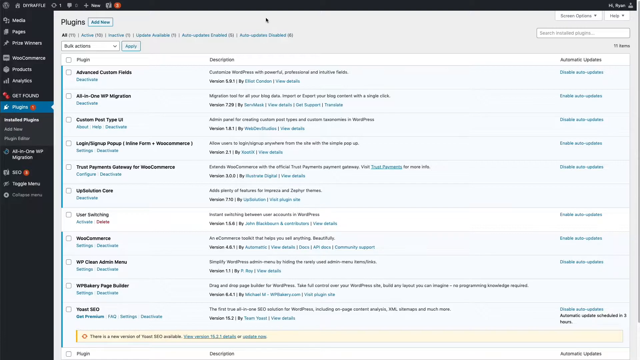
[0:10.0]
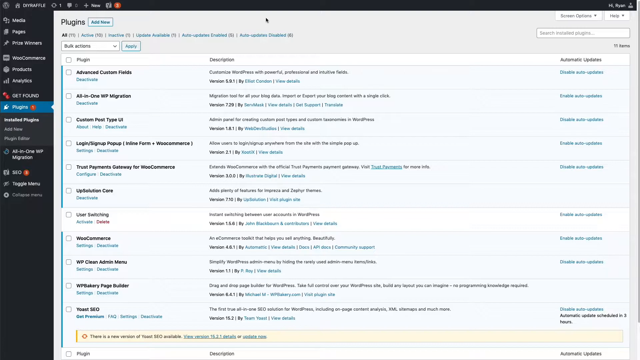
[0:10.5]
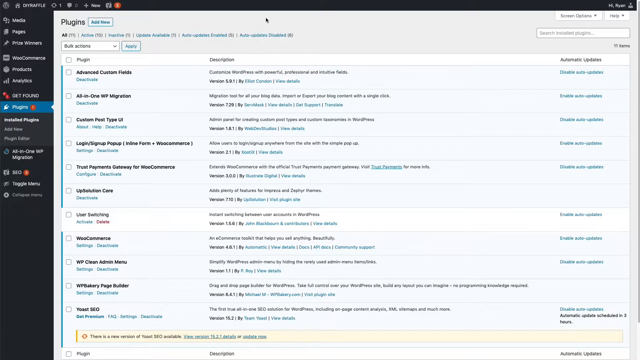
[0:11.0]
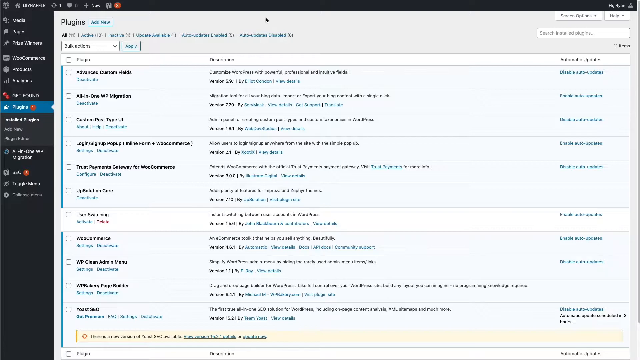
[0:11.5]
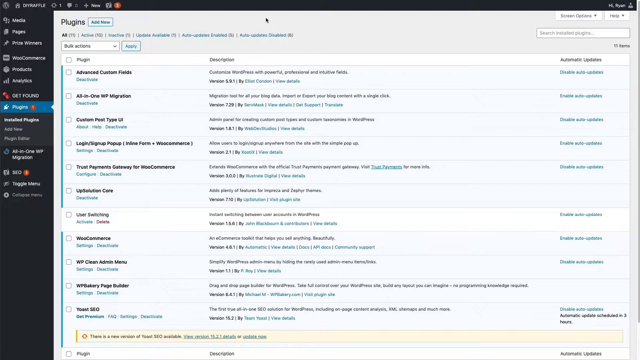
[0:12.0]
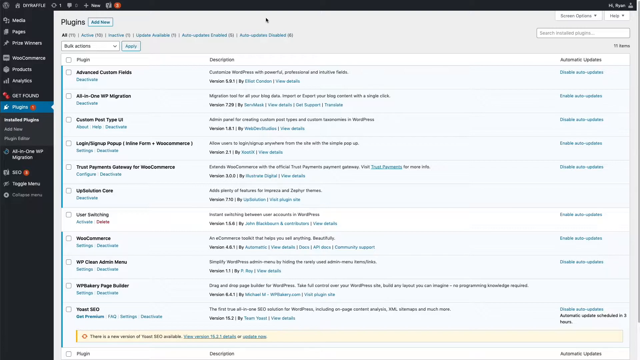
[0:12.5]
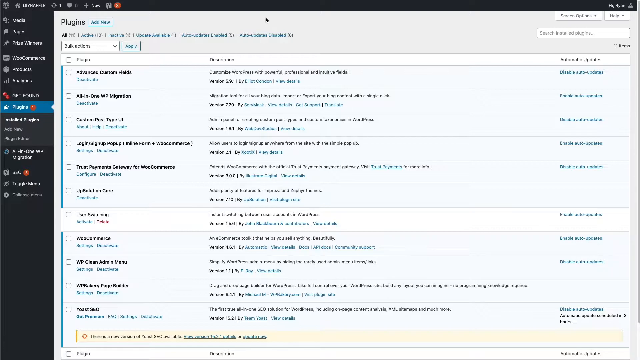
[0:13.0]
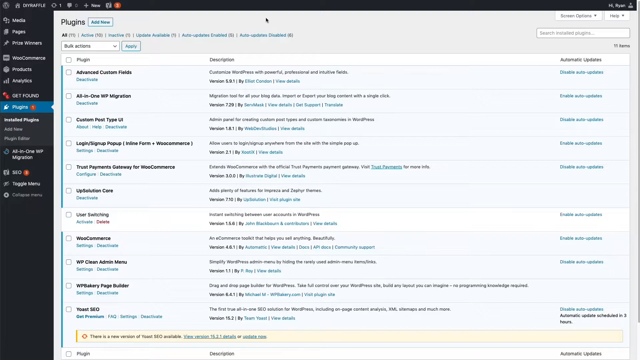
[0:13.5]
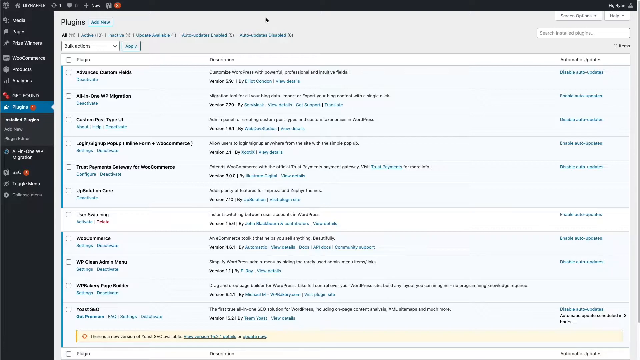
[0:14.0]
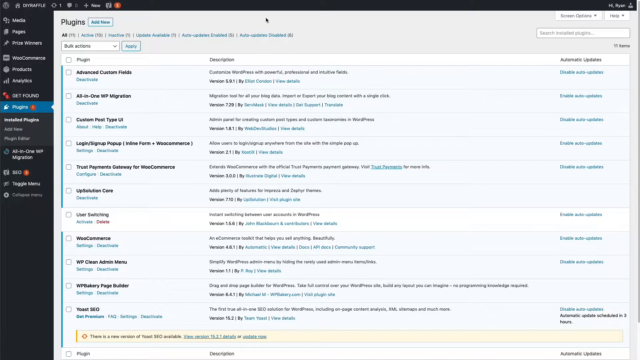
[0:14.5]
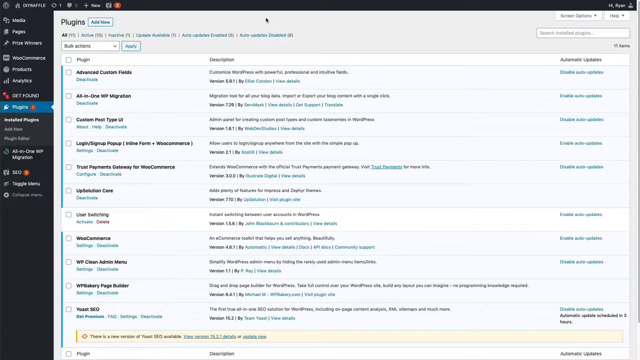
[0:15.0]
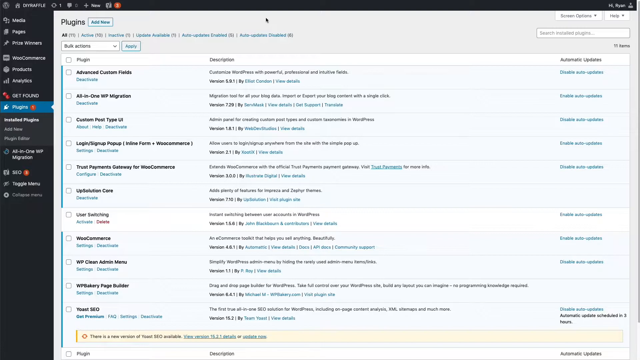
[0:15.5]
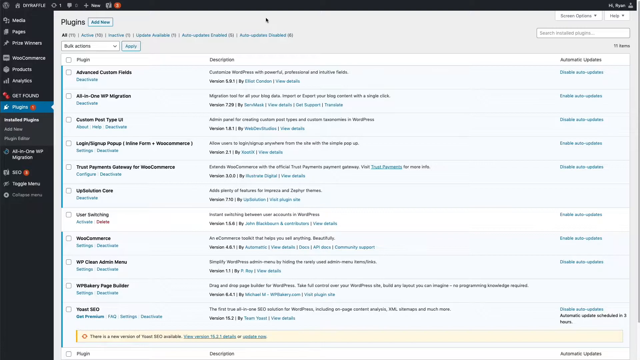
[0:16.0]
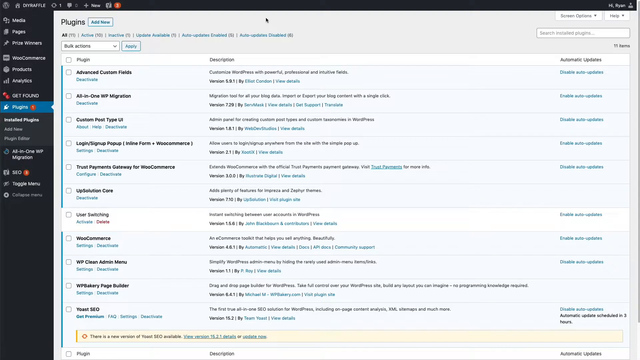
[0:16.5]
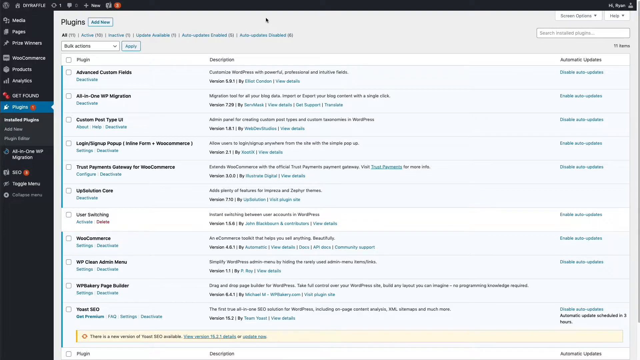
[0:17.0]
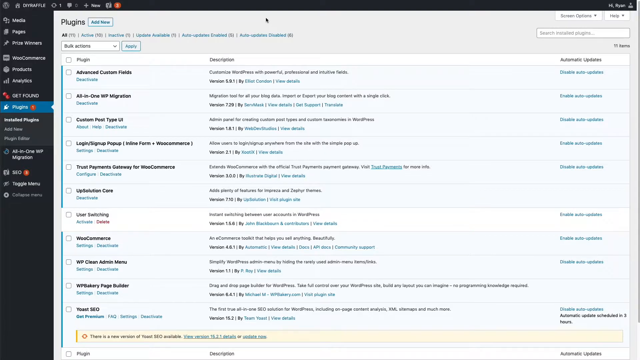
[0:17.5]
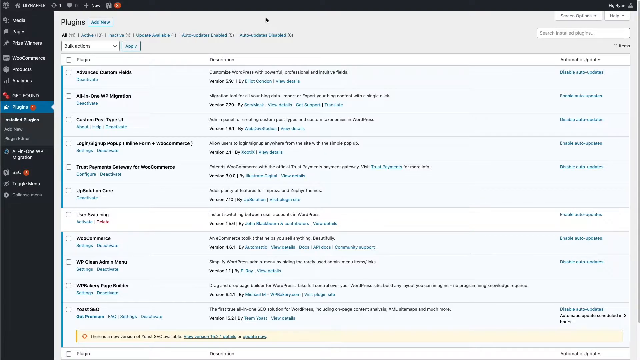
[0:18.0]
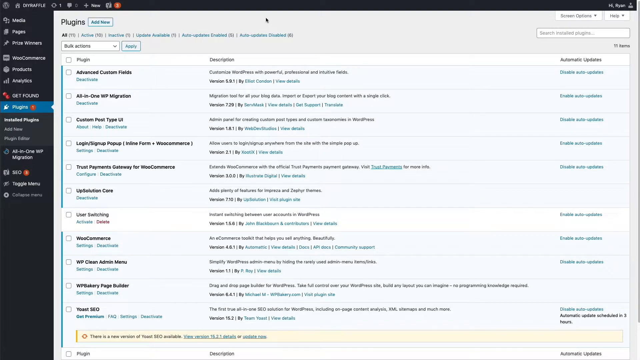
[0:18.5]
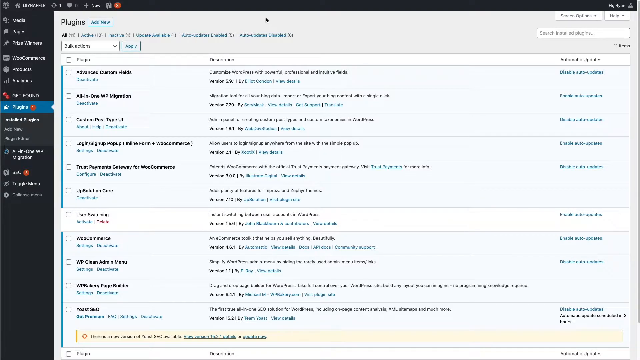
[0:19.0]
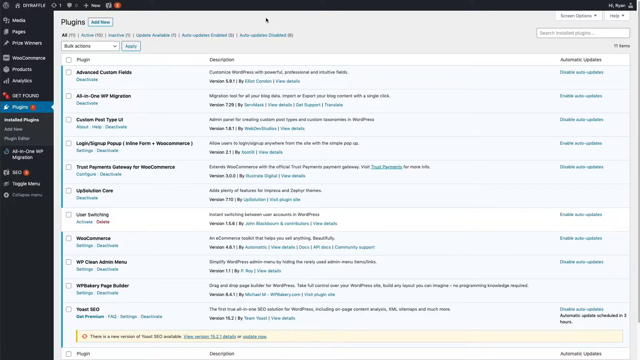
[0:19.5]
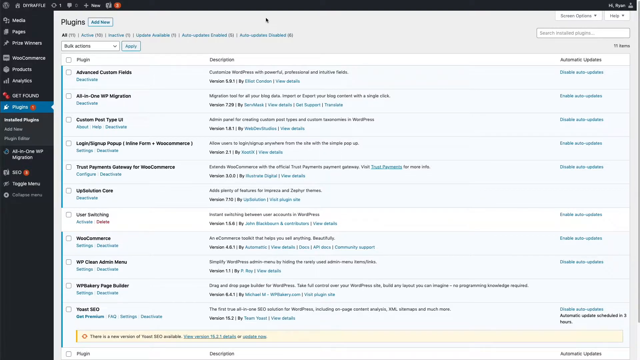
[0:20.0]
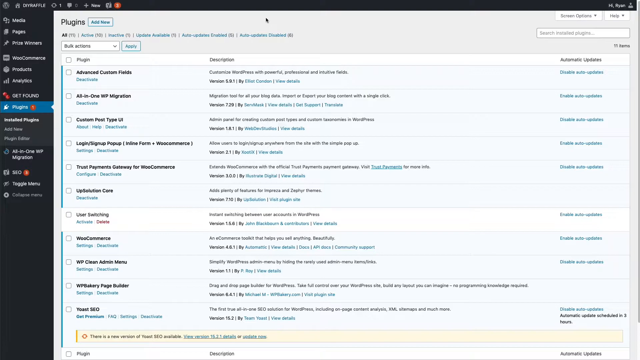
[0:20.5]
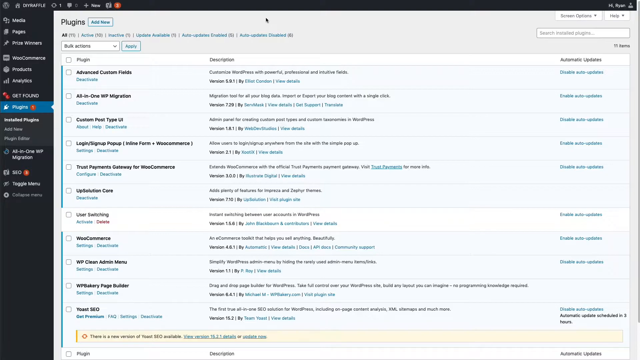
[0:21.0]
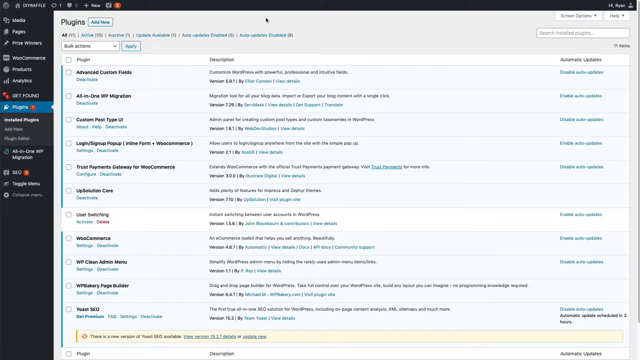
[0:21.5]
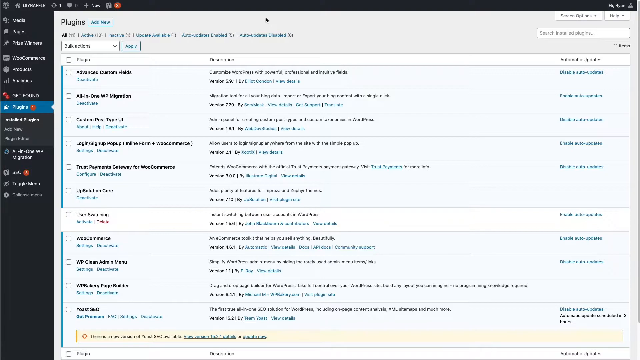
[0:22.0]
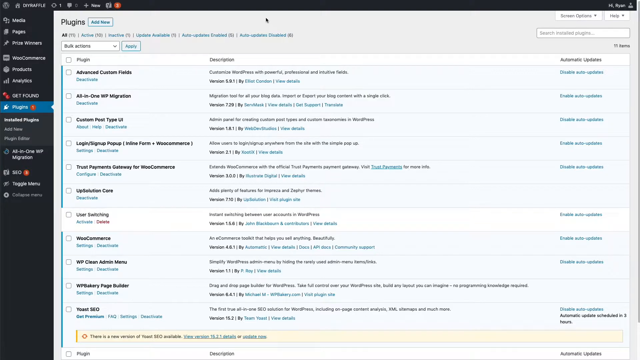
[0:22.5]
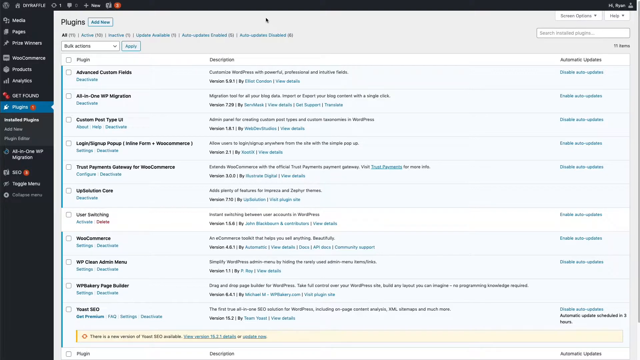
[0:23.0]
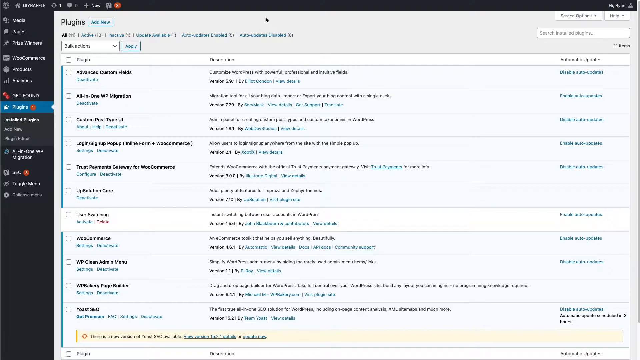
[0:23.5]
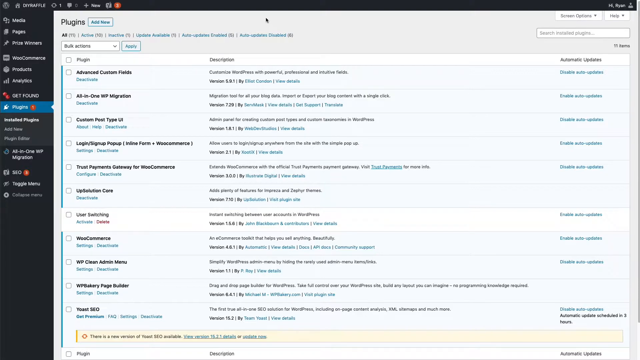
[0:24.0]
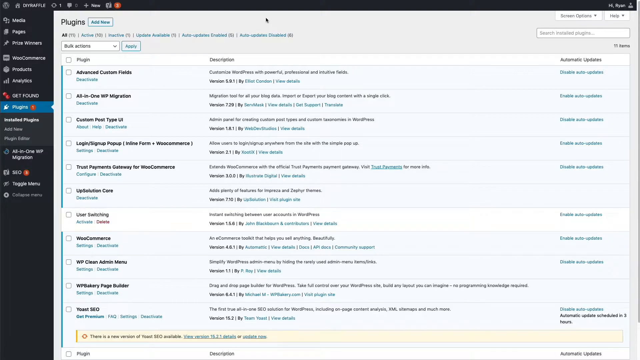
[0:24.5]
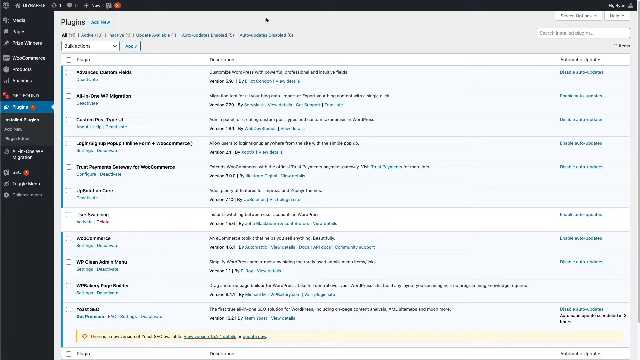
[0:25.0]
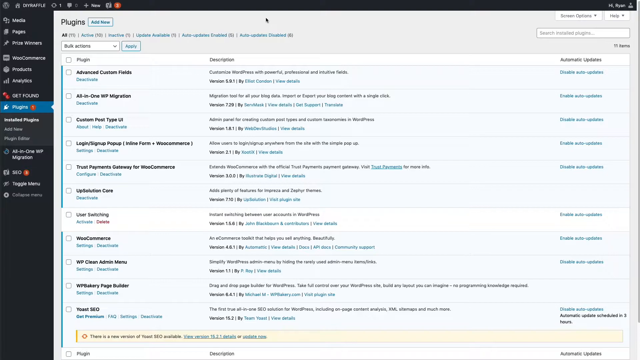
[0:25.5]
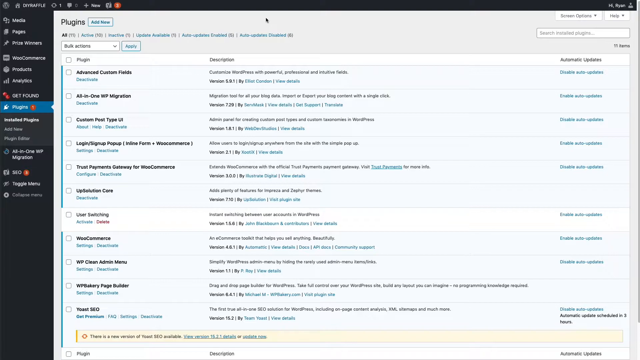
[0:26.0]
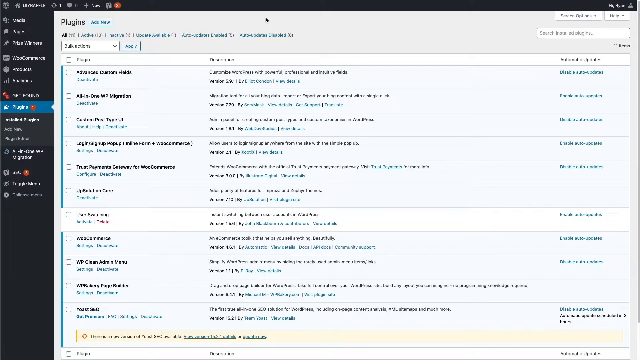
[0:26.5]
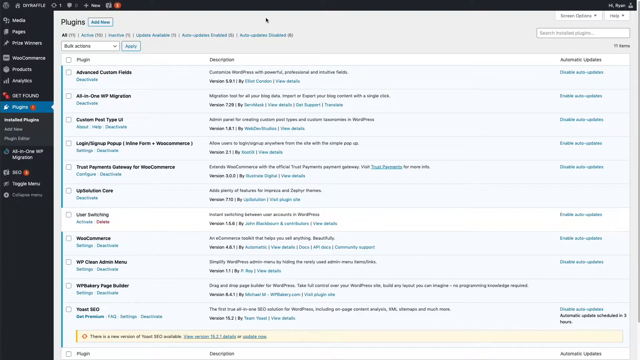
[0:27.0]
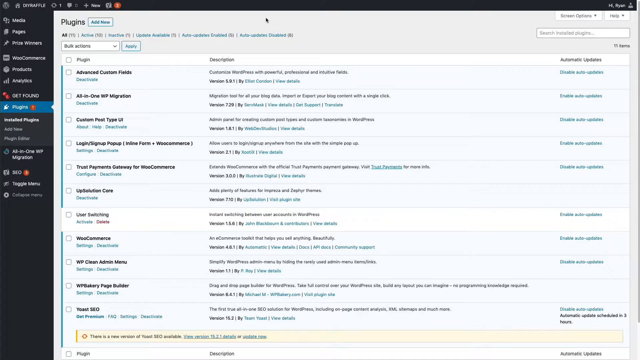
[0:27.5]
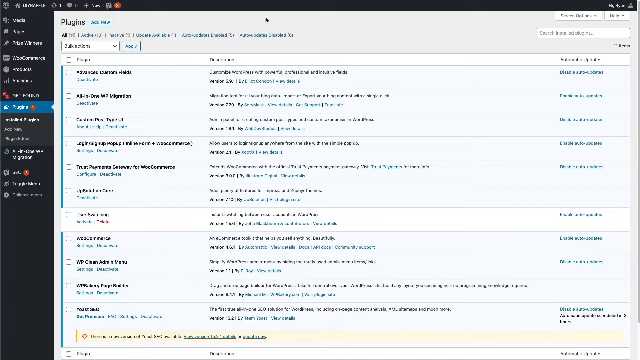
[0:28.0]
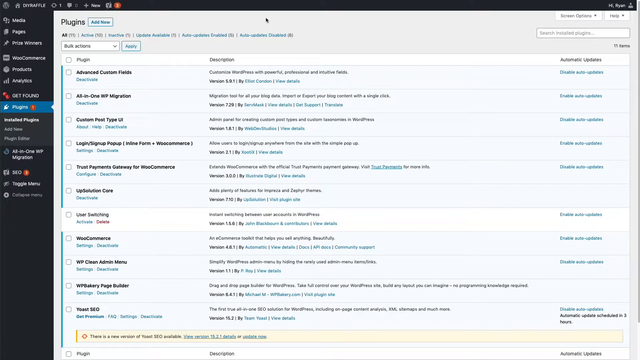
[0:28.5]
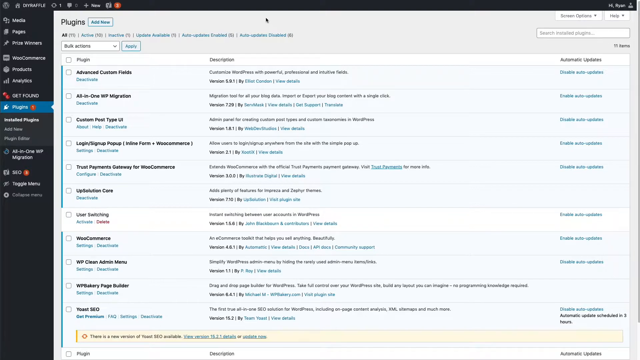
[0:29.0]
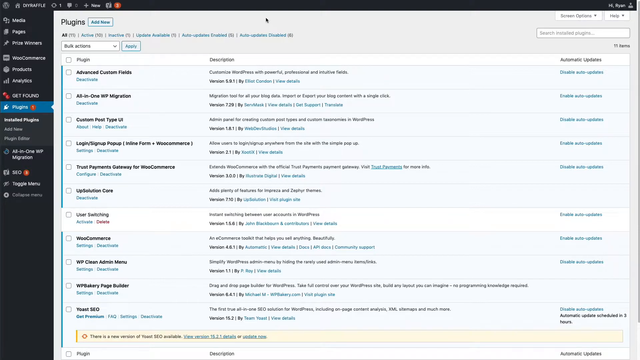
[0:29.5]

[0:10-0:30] The active window for the plugin menu option is still open. In the upper right-hand corner at the top of the plugin menu there are options to look up help topics and change the screen display, plus a search for a specific plugin name or type. In the list of eleven plugins, the seventh appears to be highlighted, with the cursor apparently on the seventh plugin down. The screen is somewhat blurry, so the plugin name is hard to make out. It seems to be an active plugin, and there is an option to delete it.